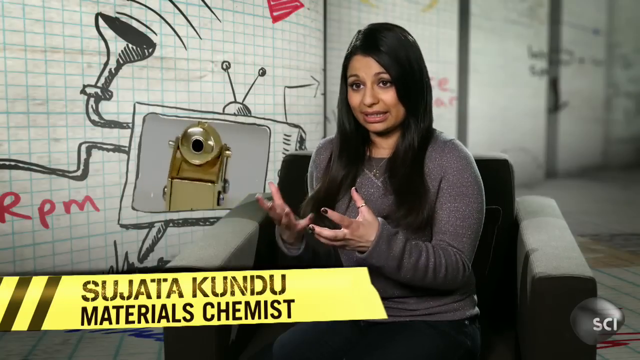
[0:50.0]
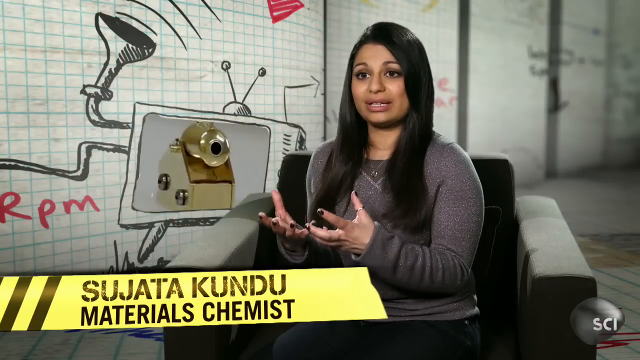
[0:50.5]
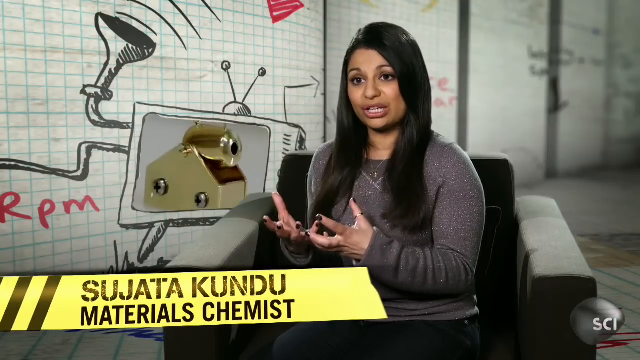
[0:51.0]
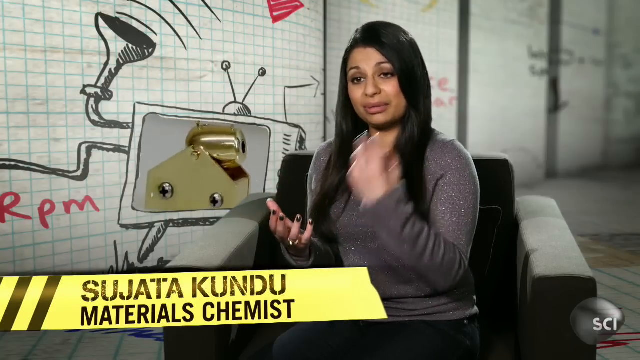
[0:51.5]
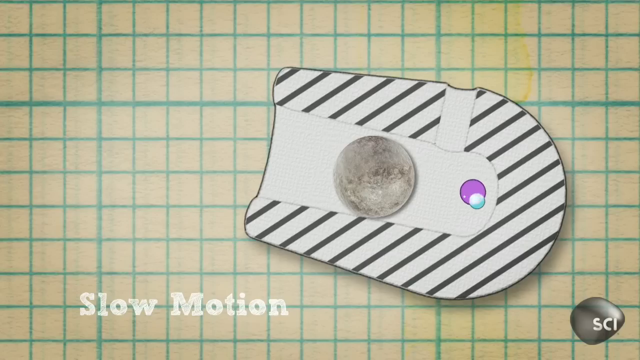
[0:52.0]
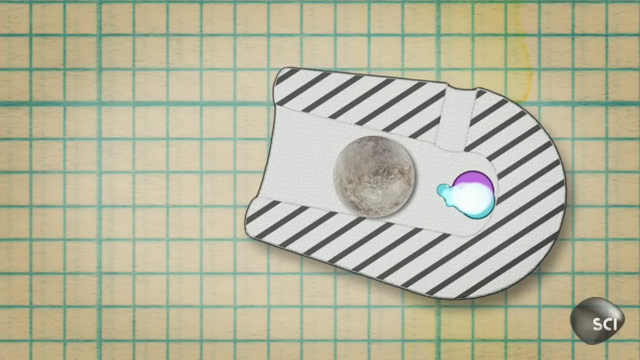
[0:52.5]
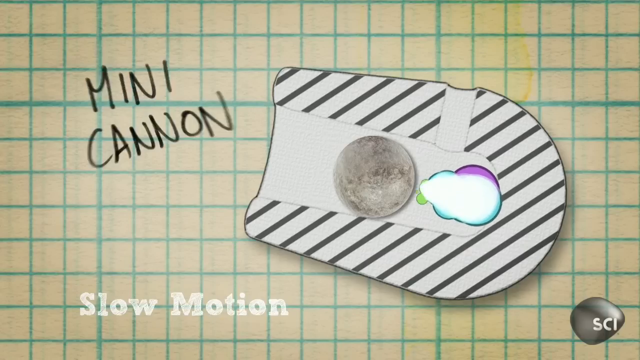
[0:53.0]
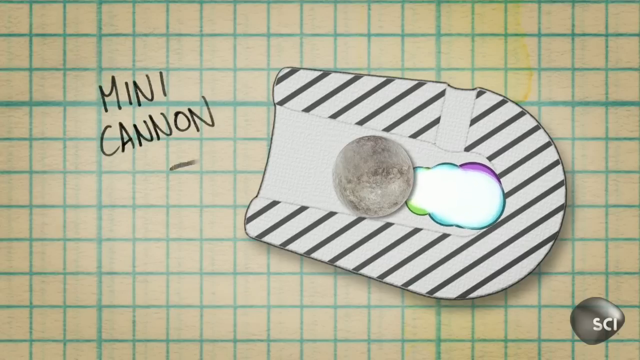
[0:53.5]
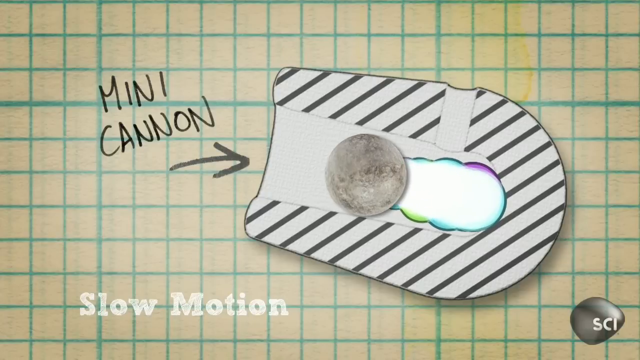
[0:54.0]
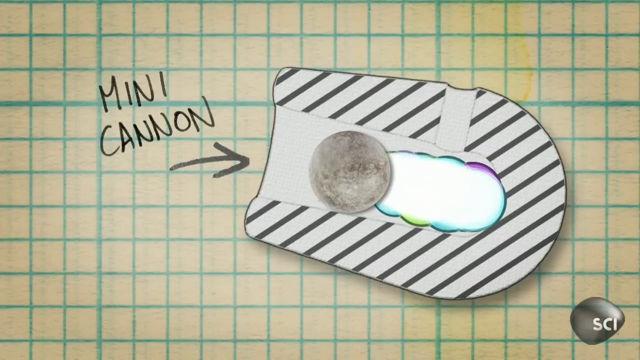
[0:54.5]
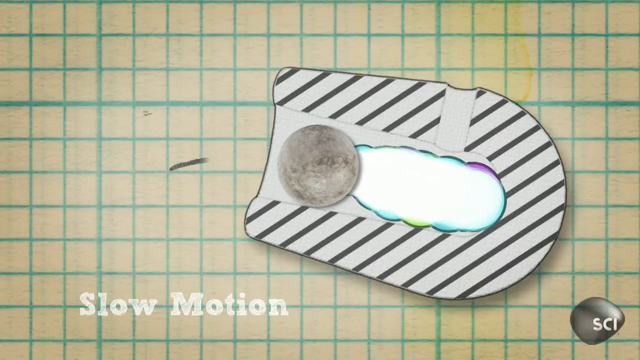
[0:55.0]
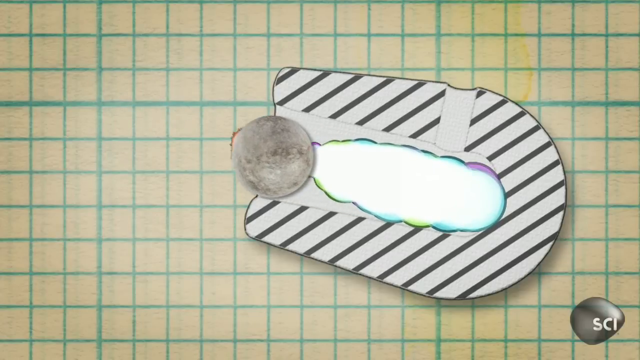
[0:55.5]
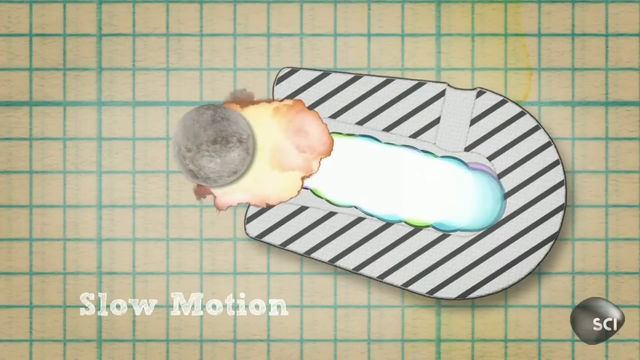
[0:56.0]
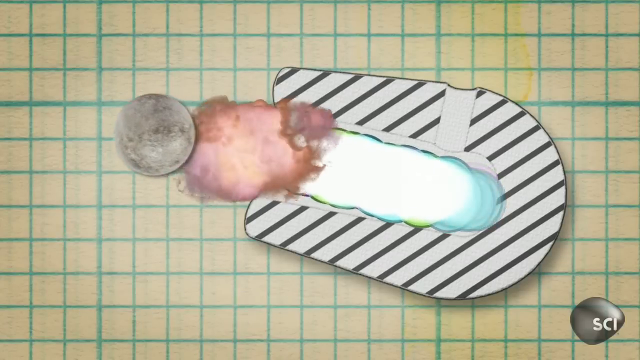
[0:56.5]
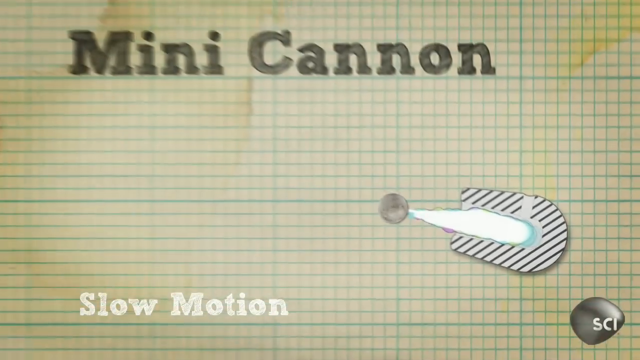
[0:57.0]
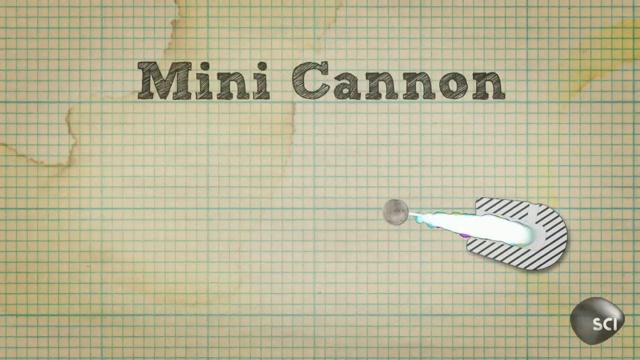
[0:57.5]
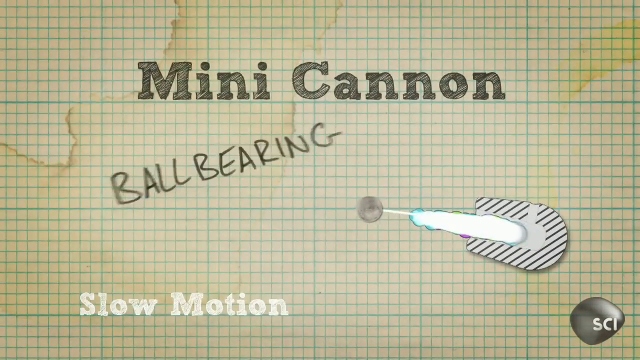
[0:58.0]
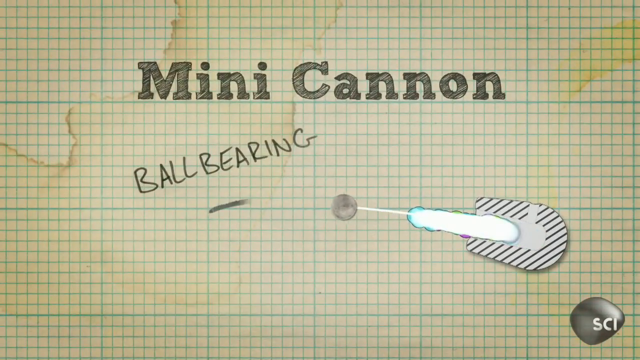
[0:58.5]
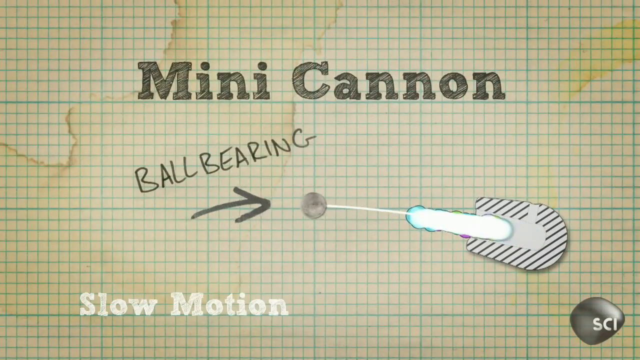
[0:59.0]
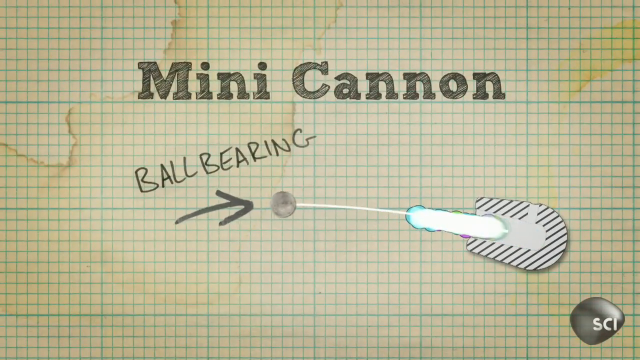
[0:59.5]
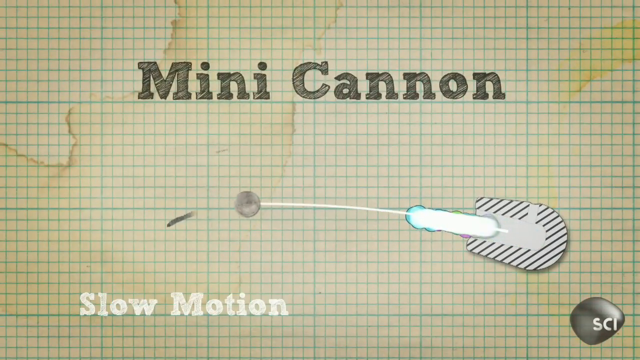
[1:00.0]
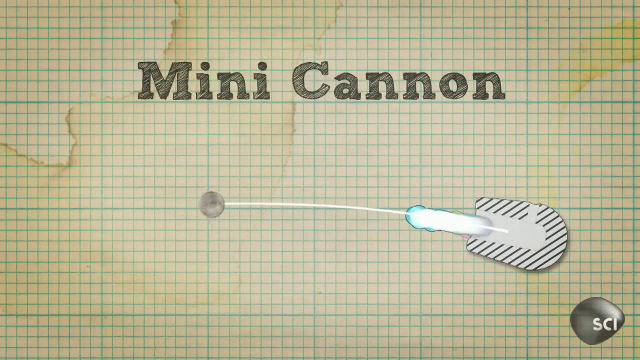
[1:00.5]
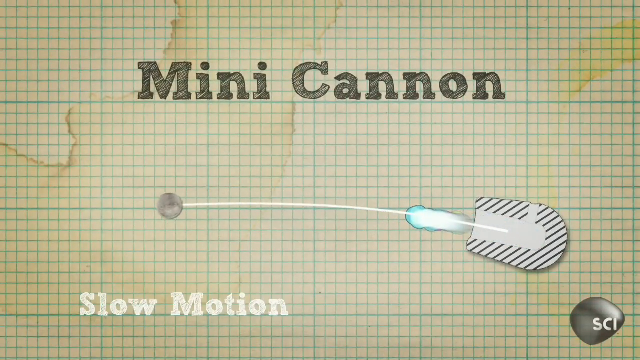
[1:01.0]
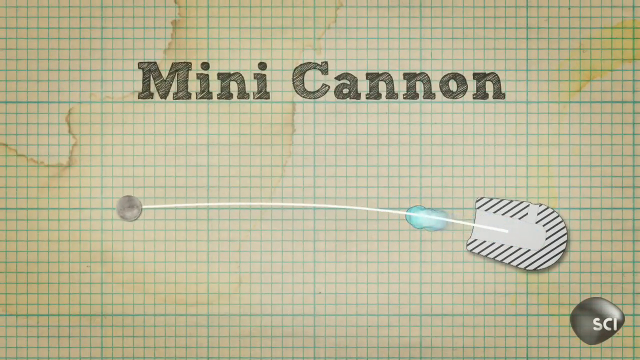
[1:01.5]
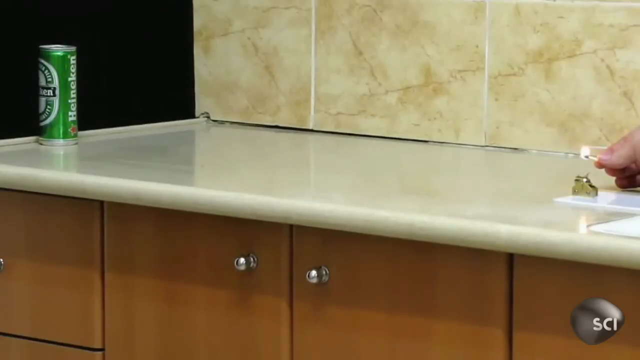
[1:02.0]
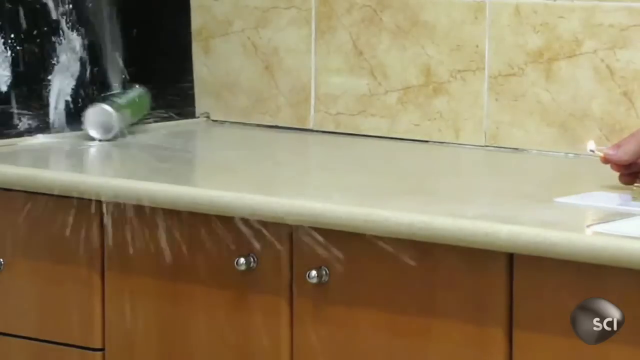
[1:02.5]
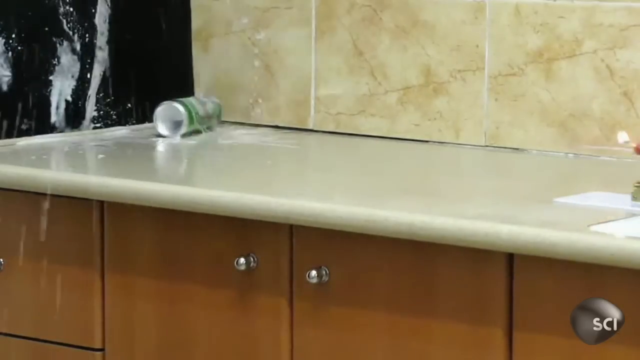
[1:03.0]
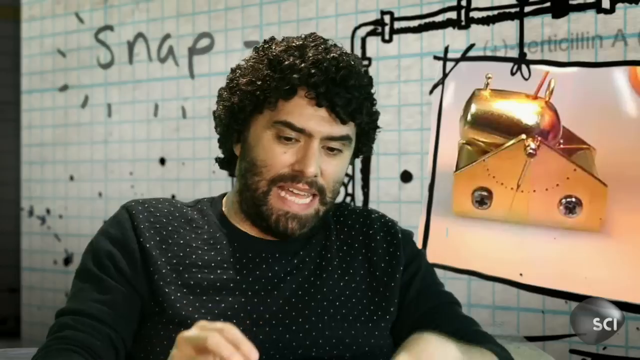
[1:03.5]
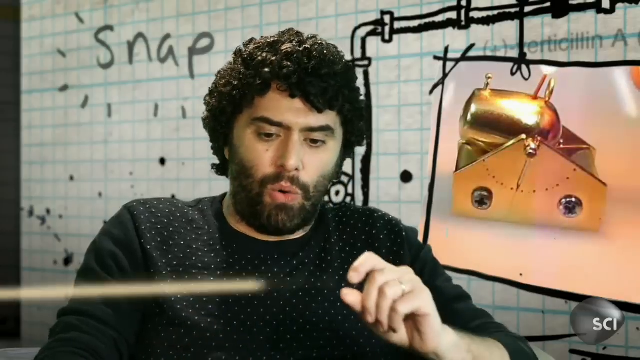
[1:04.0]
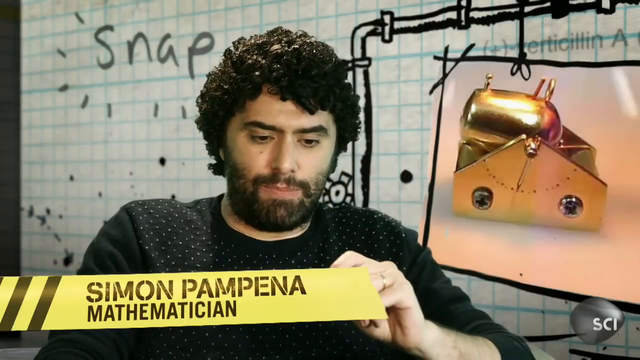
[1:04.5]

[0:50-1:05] A woman talks in front of a screen. A diagram shows the mini-cannon expelling a ball in slow motion, with the ball labeled "ball bearing" and the words "mini-cannon" in and above the diagram. The ball hits what looks like a soda or beer can, which kind of explodes and sprays all over the place; liquid comes out of two different spots, so the ball apparently made two holes and went all the way through. A man with a beard appears talking for about a second.